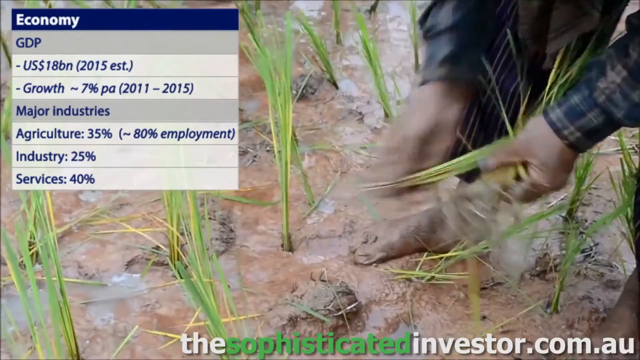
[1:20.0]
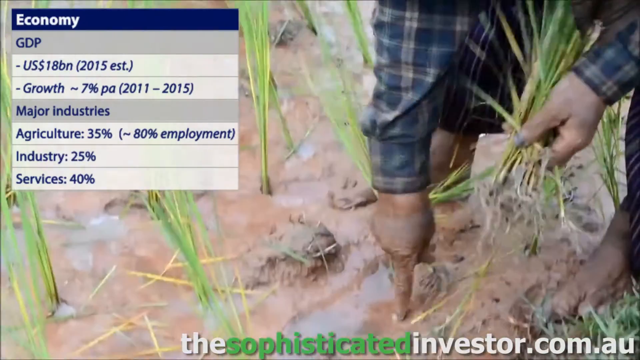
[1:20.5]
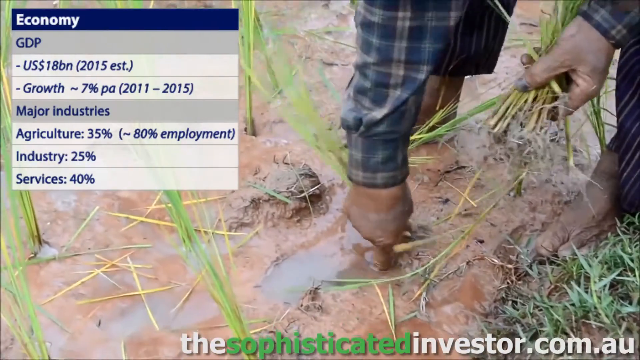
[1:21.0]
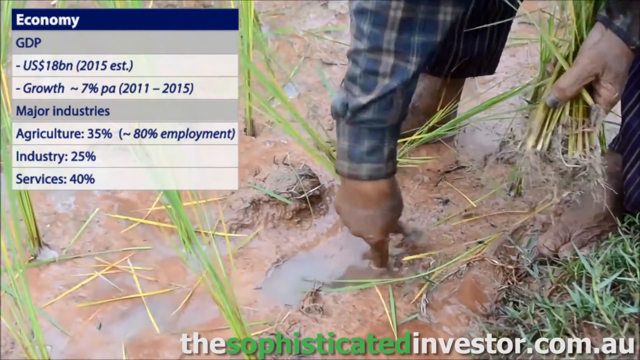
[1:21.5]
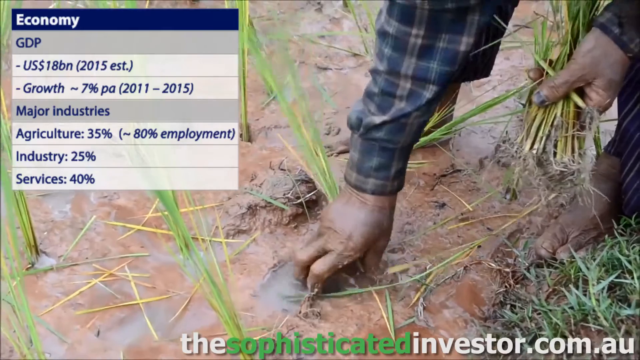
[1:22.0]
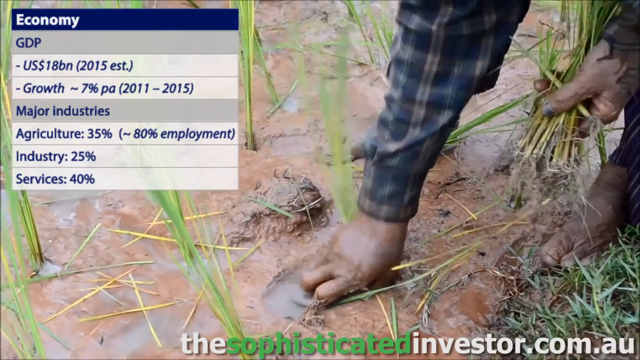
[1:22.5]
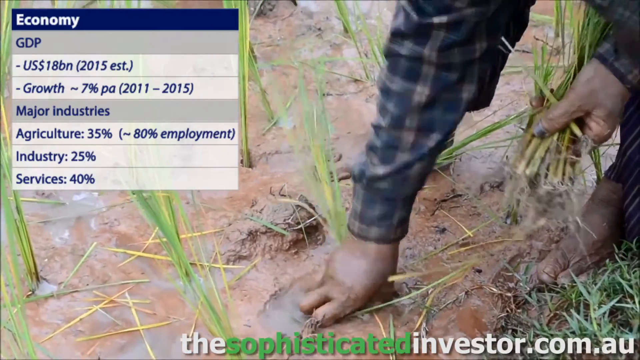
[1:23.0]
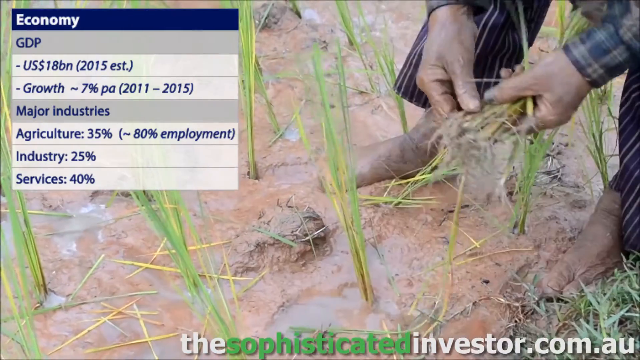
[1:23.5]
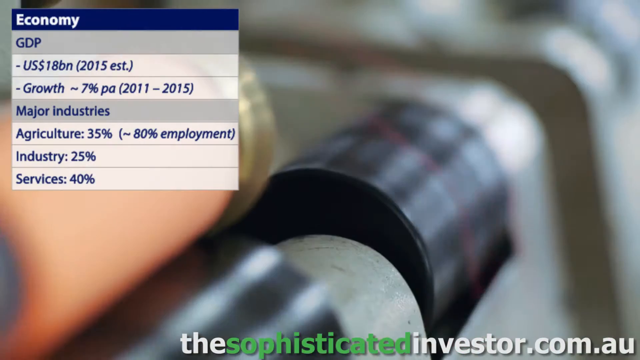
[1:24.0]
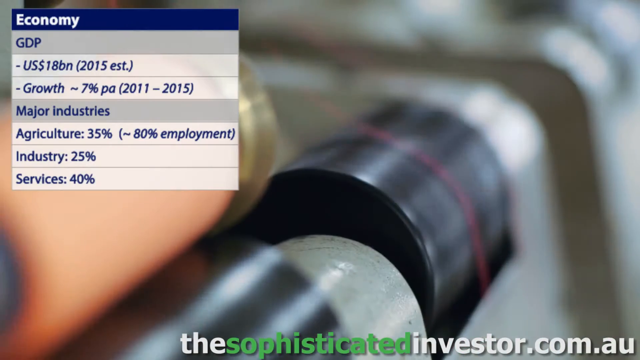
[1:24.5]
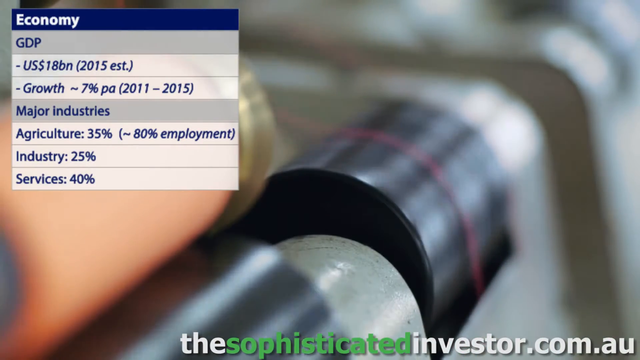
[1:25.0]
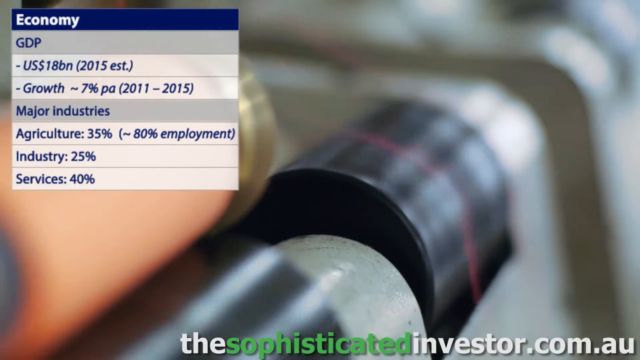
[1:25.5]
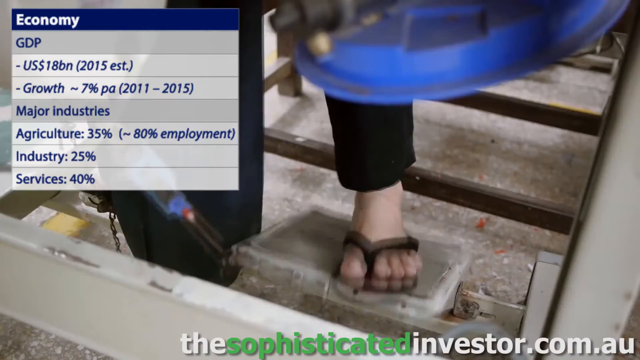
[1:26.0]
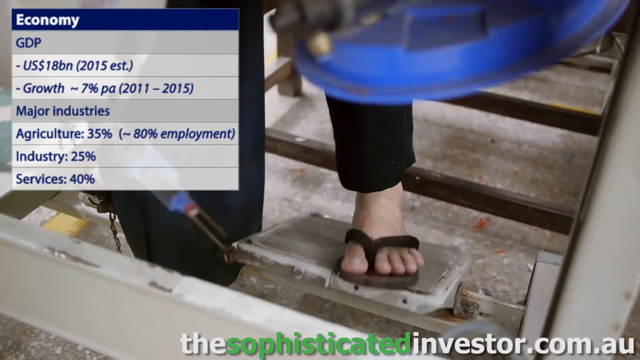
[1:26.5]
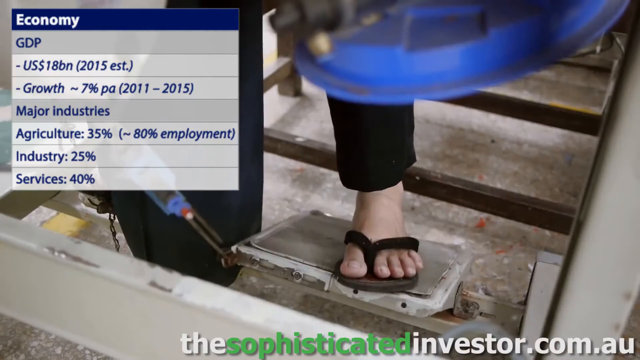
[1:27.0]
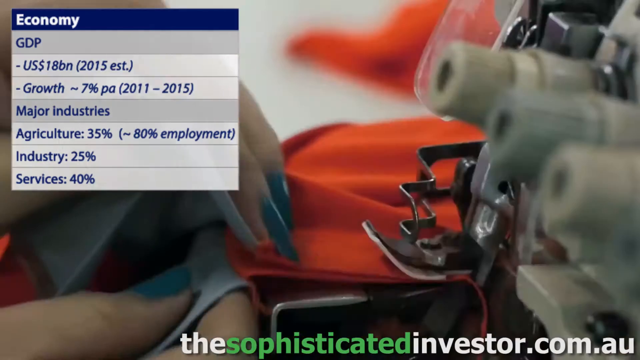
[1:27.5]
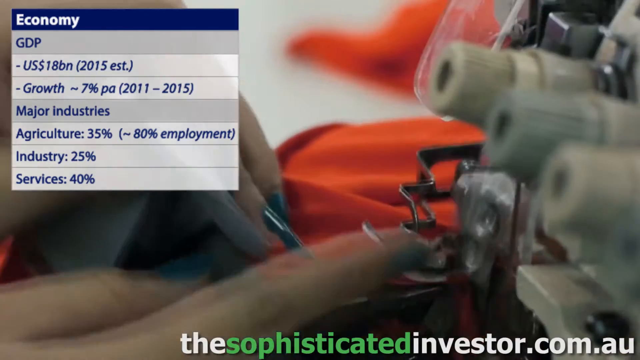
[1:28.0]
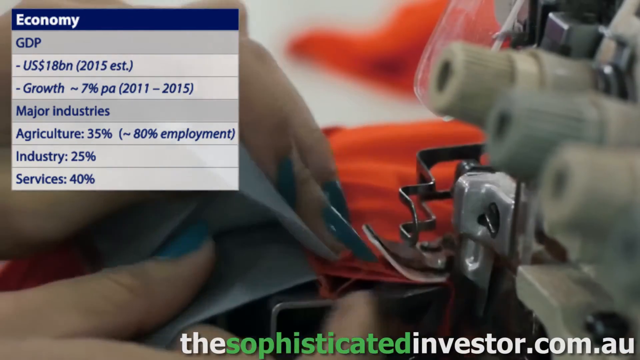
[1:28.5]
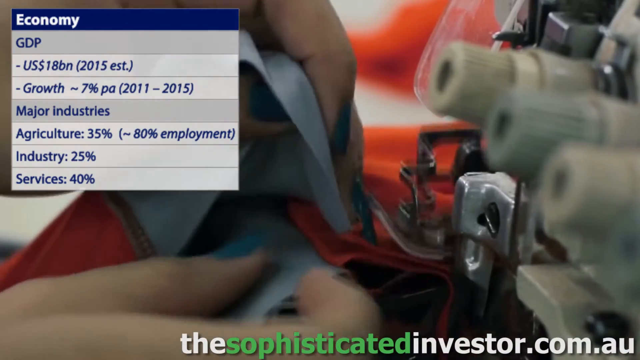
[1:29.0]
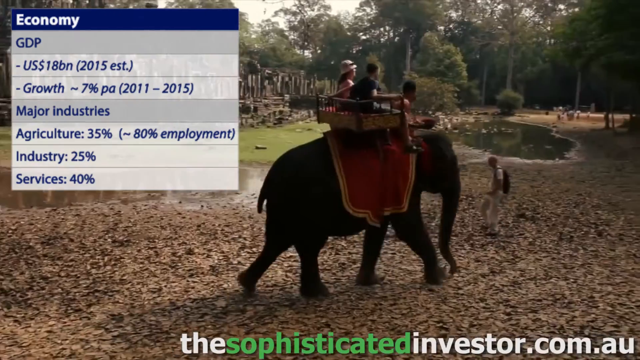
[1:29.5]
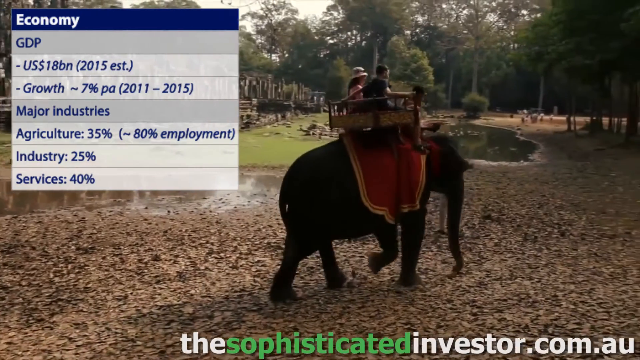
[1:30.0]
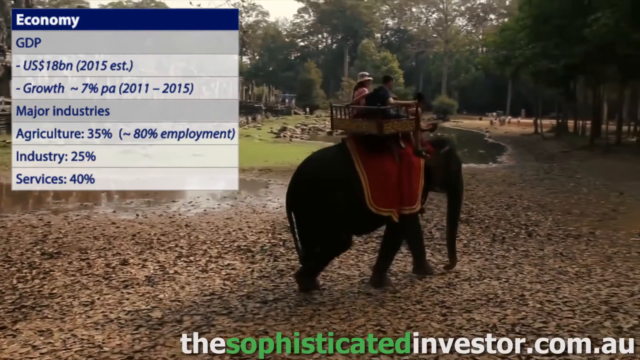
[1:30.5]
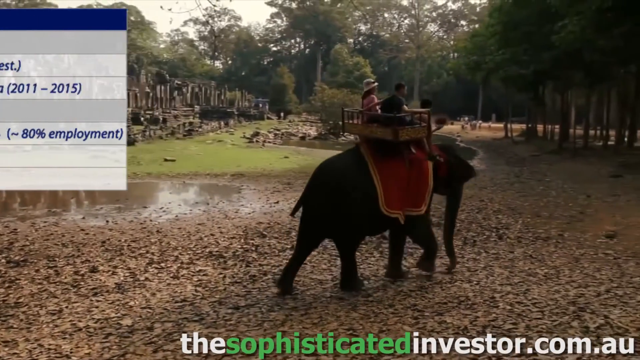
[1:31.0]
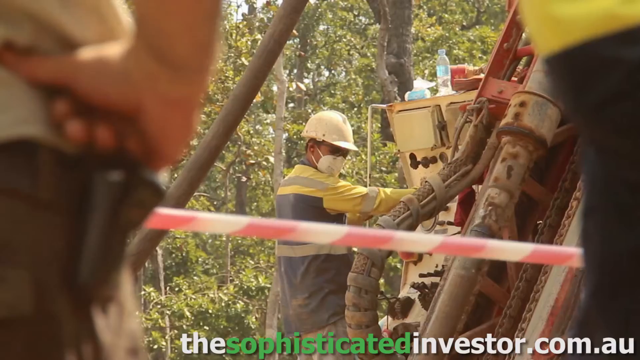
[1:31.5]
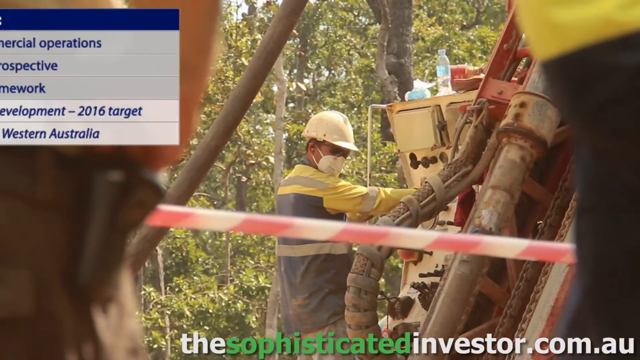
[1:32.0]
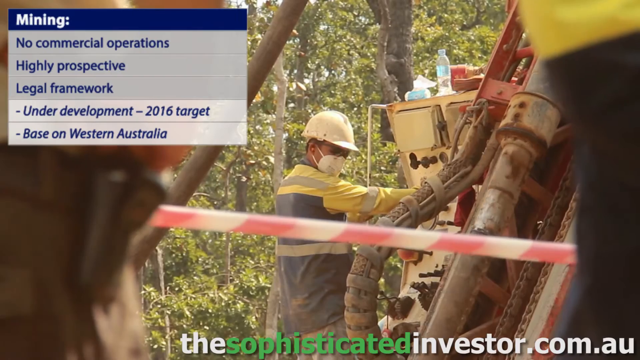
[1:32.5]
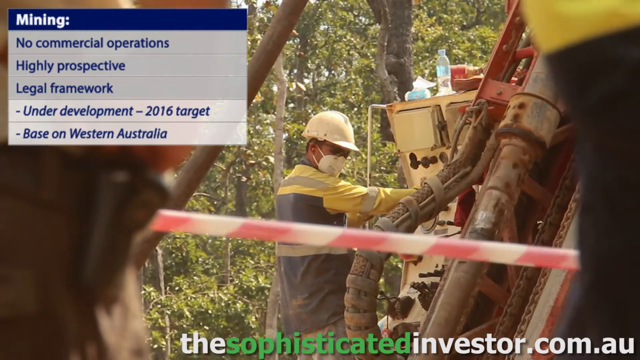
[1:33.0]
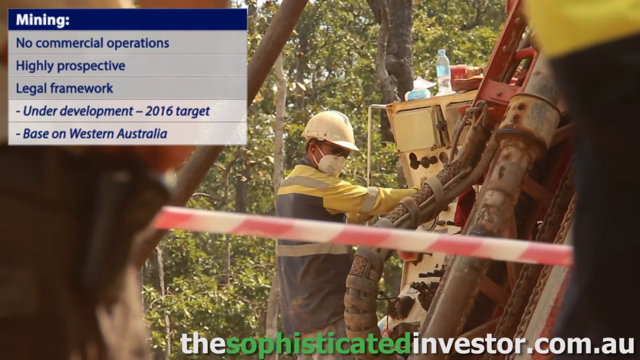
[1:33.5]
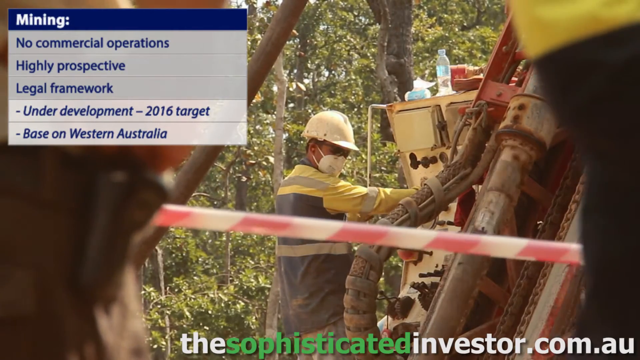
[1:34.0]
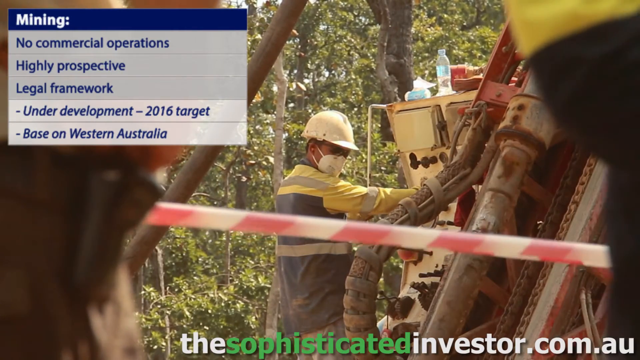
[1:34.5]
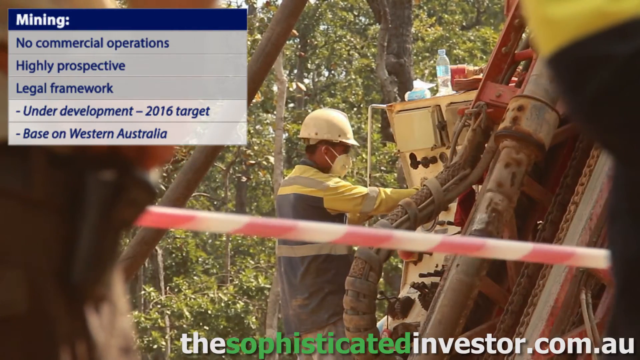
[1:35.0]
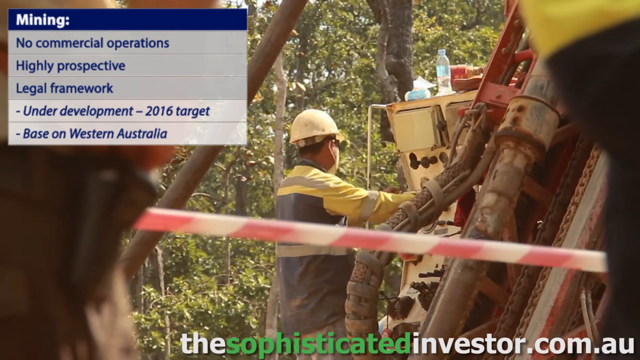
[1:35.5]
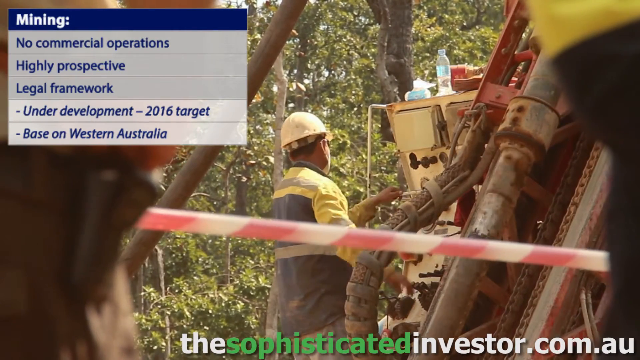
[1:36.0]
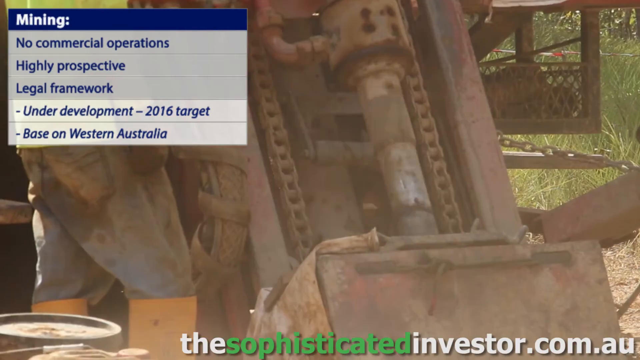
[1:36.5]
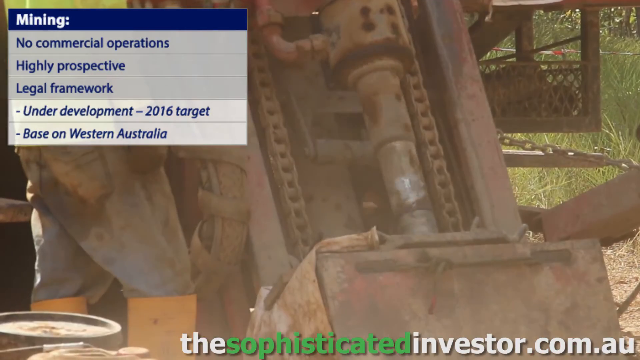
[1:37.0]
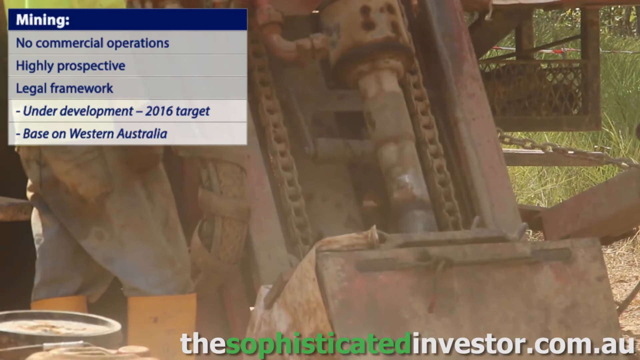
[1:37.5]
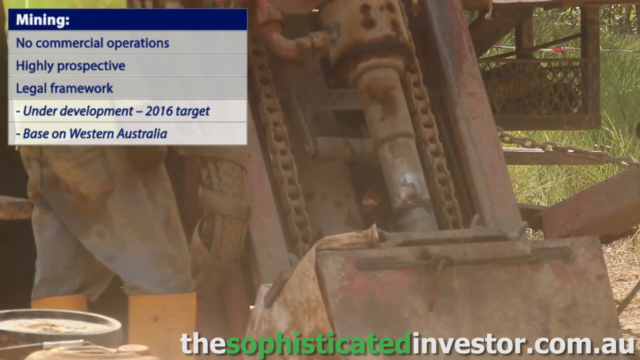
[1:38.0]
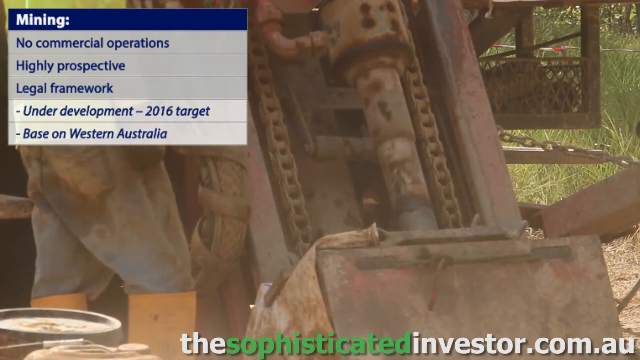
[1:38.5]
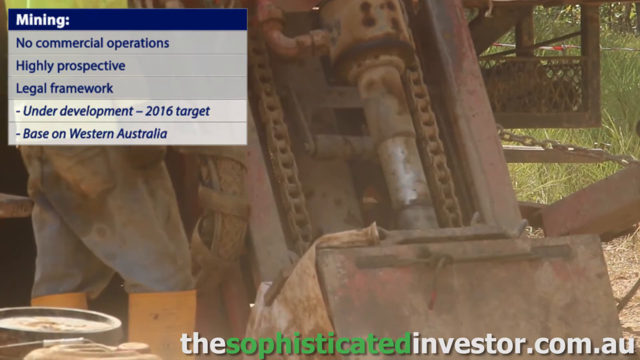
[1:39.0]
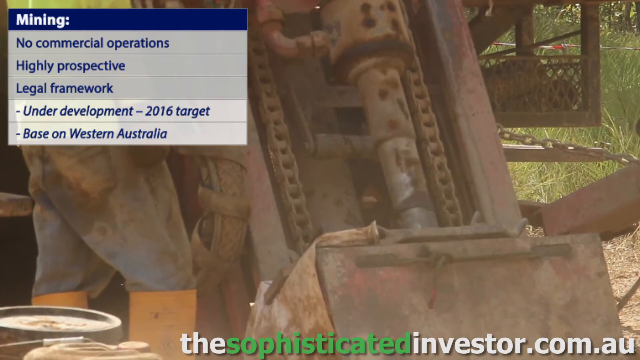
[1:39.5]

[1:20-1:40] A couple of arms come into the scene from the upper right-hand corner. The person appears to be bent over, so their feet are also visible. They wear a blue plaid long-sleeve shirt and work in mud with green spikes of vegetation coming out of it. The video then transitions to a foot, apparently a left foot, in a black flip-flop and long black pants, working a pedal with the ankle moving forward and back; the pedal is possibly attached to a sewing machine. That scene cuts abruptly to a couple of hands with teal fingernails coming in from the left side, working what appears to be a sewing machine and running a piece of light blue and red fabric under the needle. It then cuts abruptly to a dark brown, almost black elephant walking toward the right side on dirt-like ground, with an almost blanket-like item over its top and a couple of people riding on it.